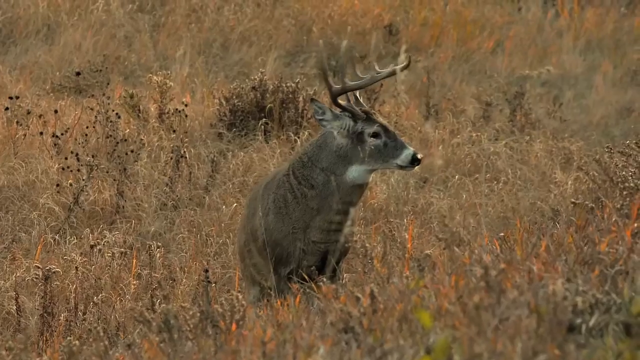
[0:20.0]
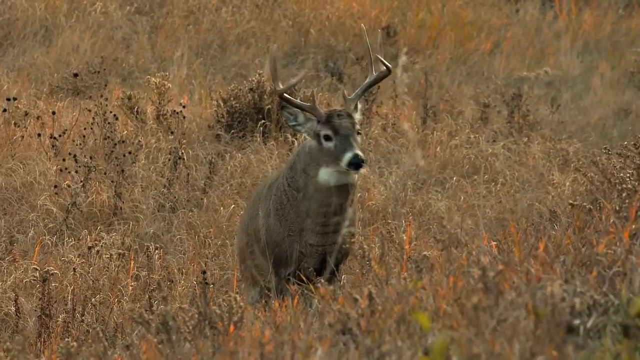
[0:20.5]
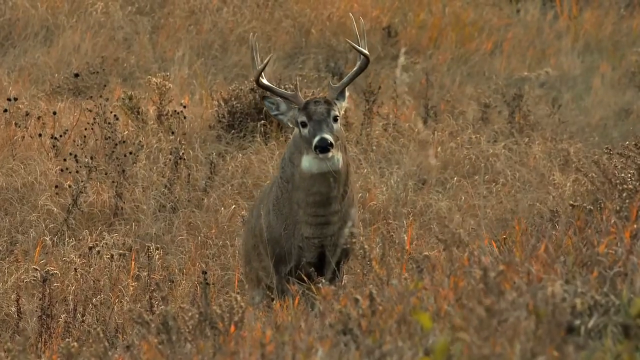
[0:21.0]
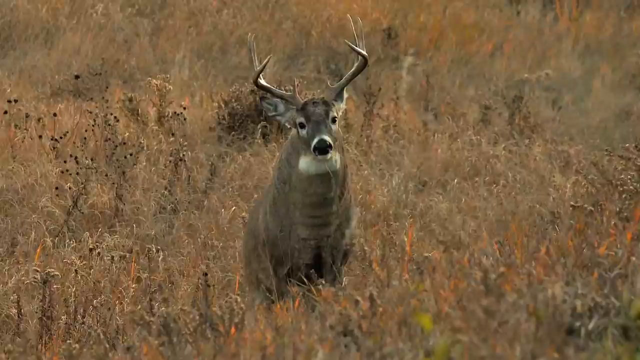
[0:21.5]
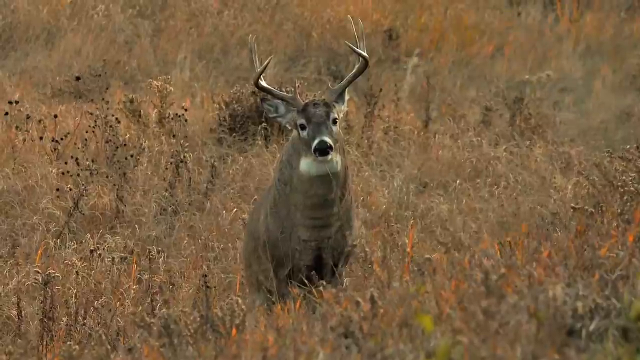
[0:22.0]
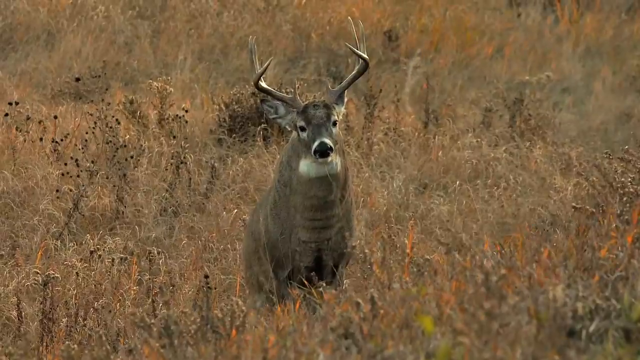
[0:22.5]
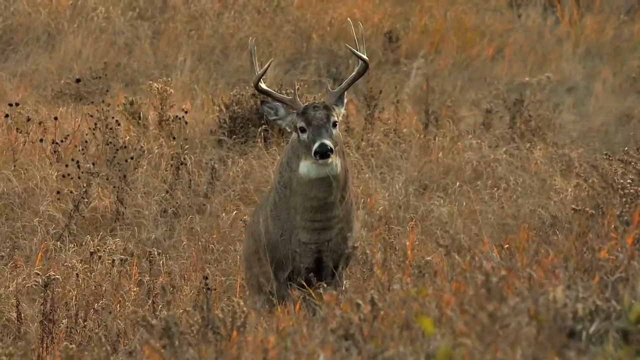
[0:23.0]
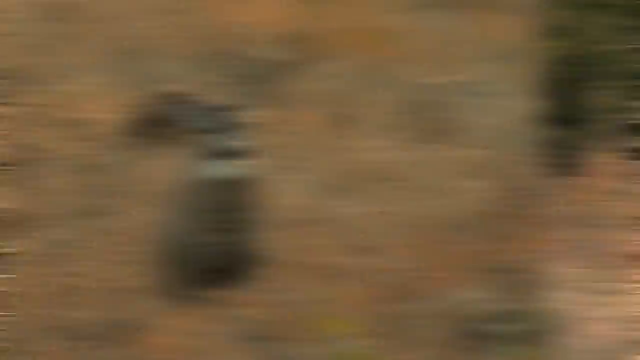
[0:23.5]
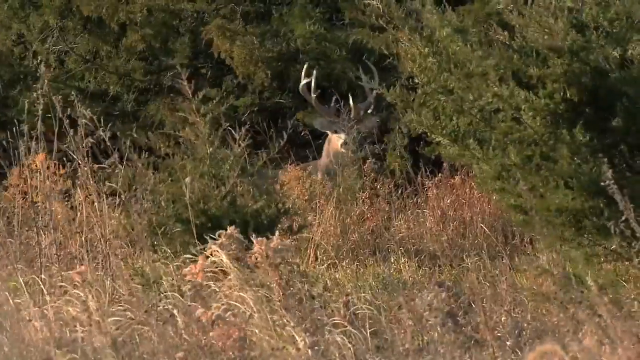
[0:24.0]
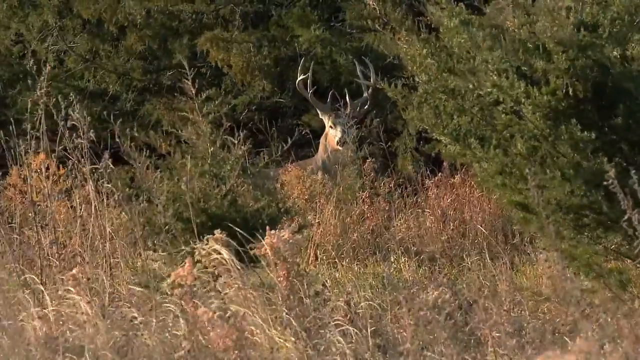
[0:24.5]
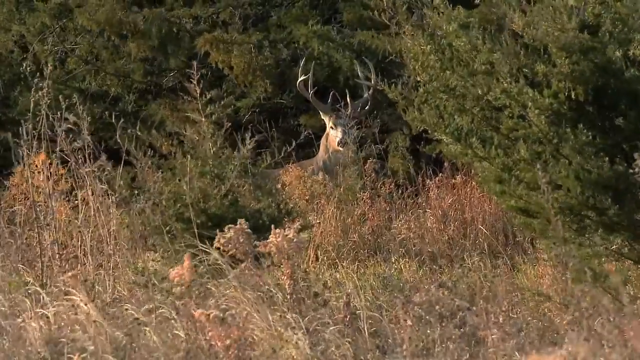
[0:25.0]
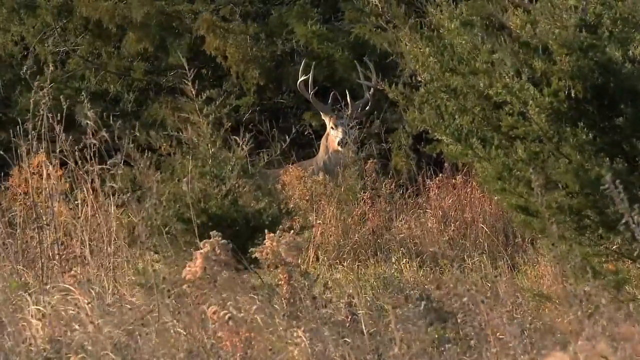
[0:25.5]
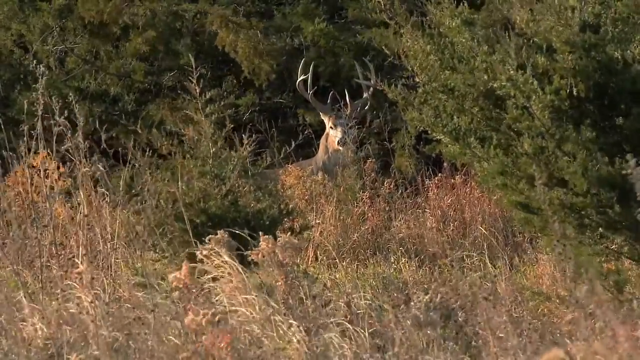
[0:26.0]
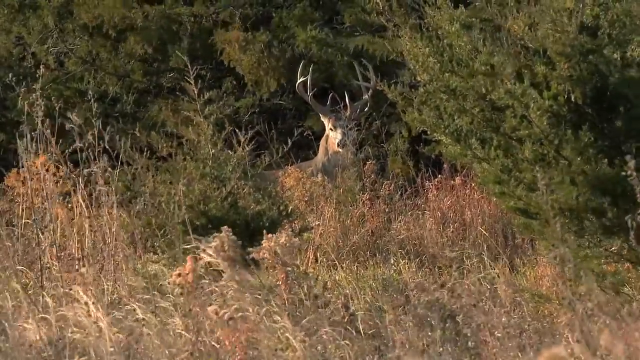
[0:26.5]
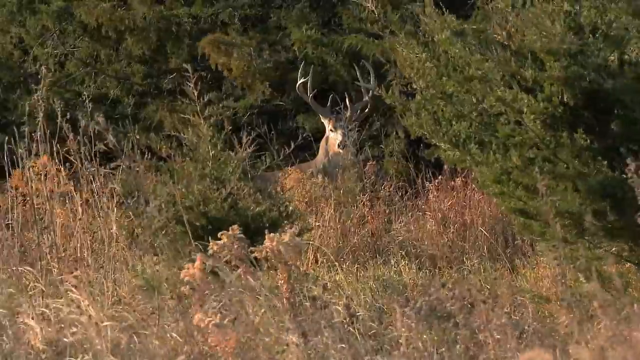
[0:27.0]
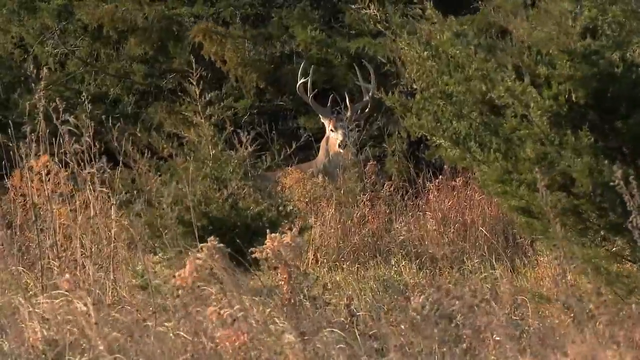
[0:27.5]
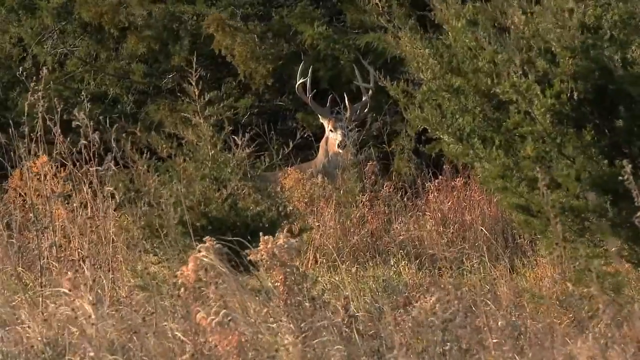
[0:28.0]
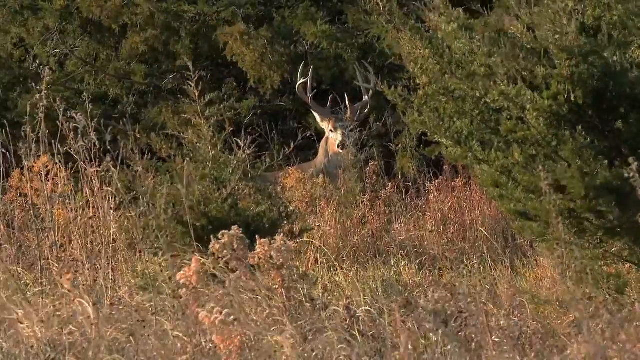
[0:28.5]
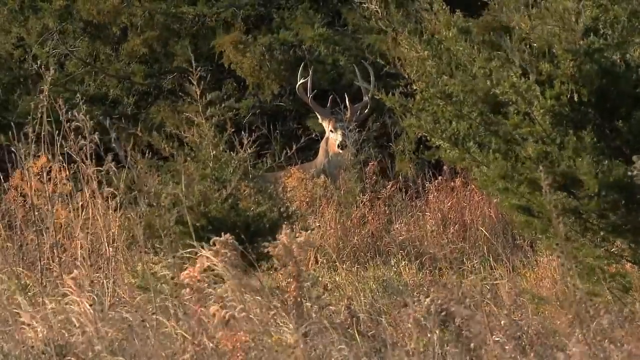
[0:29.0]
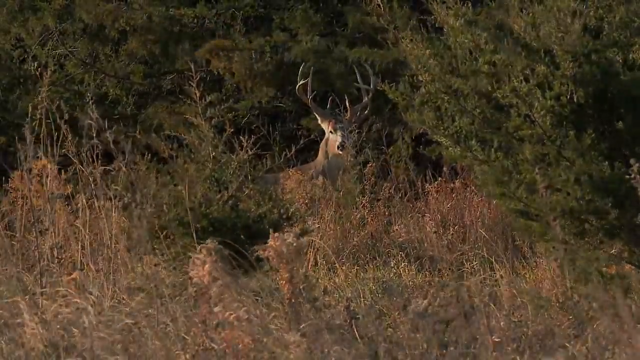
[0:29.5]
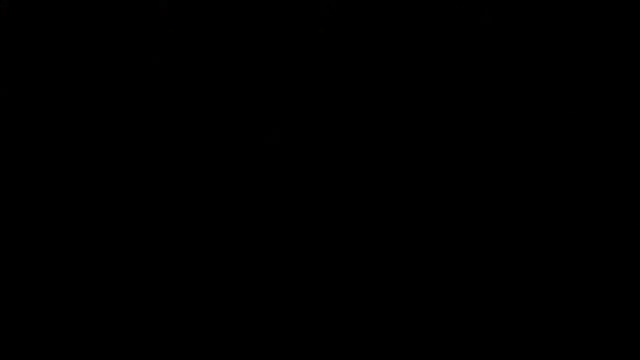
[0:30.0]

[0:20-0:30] A buck stands in the middle of the field. A close-up view shows the buck, which could be a five or six point; its head turns to look at the camera. The video swipes to the left to another view of a deer in the distance, also a large buck, standing behind a lot of foliage. He pops his head up very fast, seemingly as if alerted to something such as a threat or just to his surroundings. The video then fades out to a black screen.